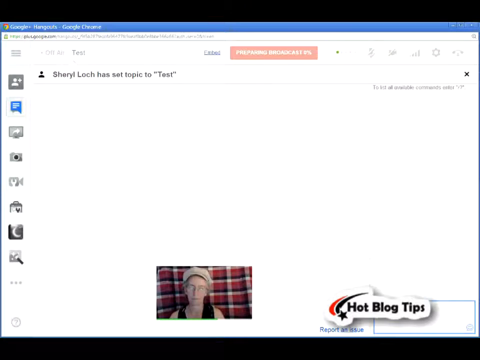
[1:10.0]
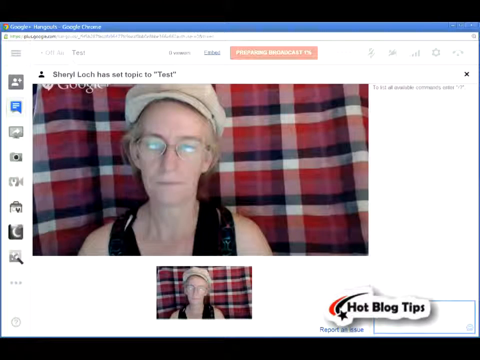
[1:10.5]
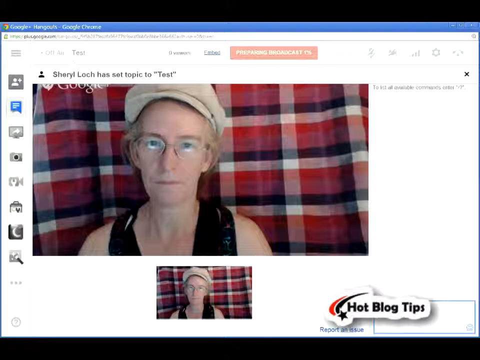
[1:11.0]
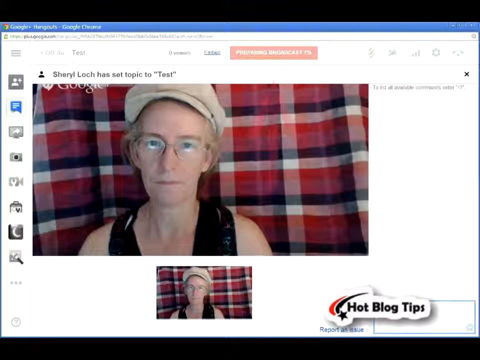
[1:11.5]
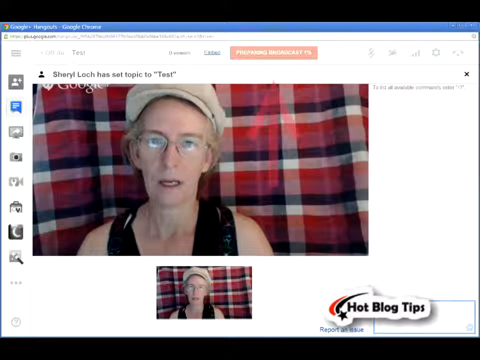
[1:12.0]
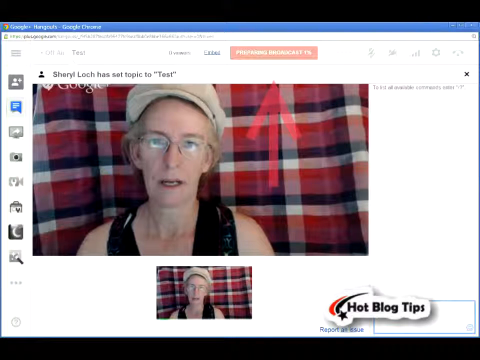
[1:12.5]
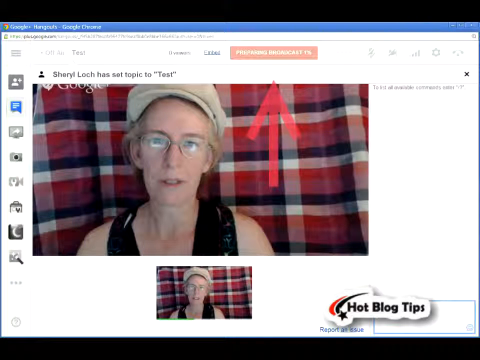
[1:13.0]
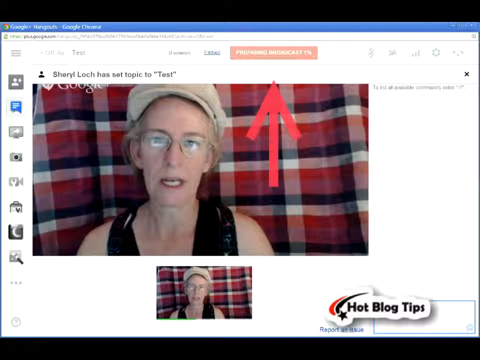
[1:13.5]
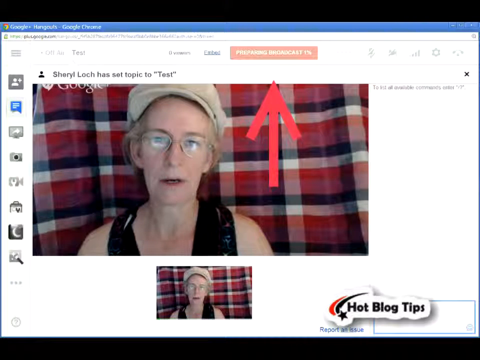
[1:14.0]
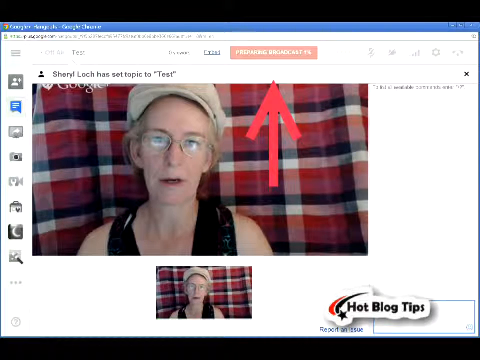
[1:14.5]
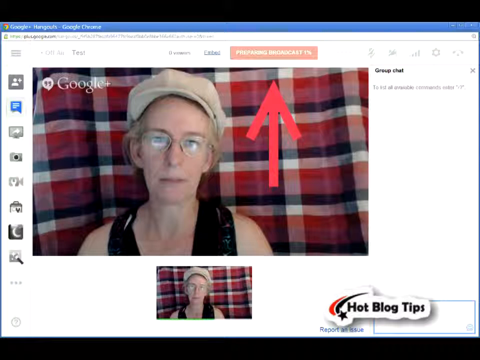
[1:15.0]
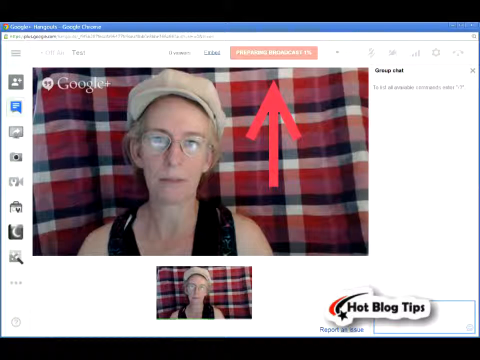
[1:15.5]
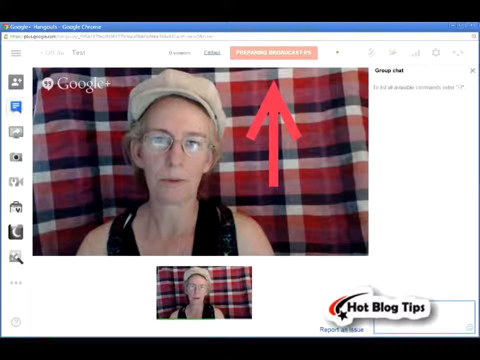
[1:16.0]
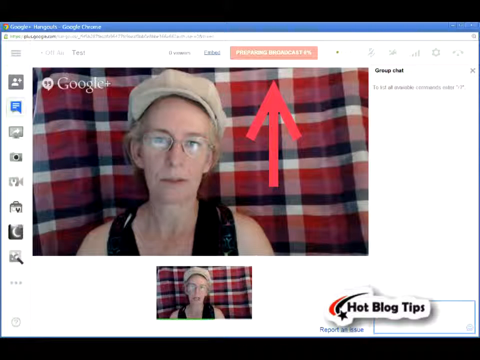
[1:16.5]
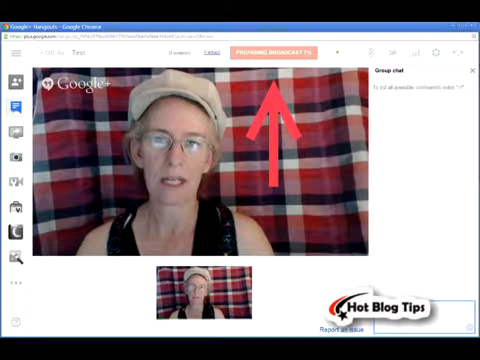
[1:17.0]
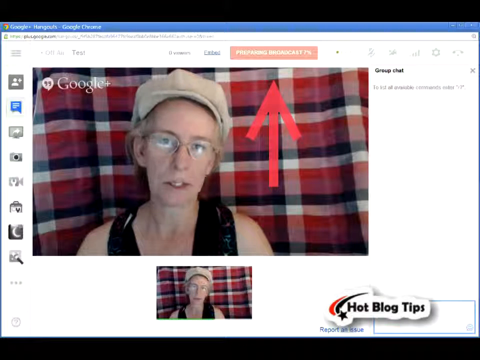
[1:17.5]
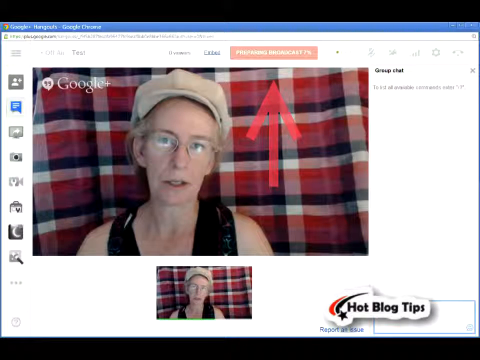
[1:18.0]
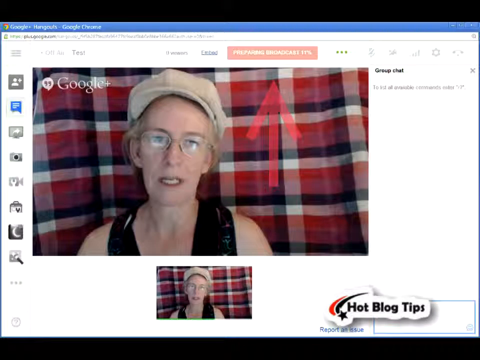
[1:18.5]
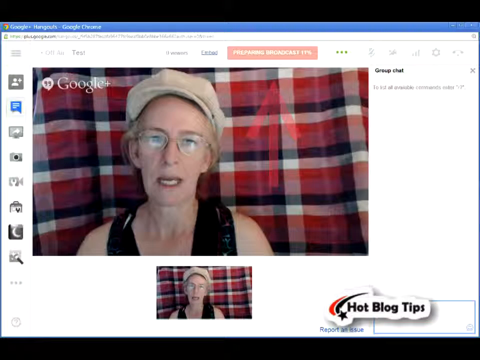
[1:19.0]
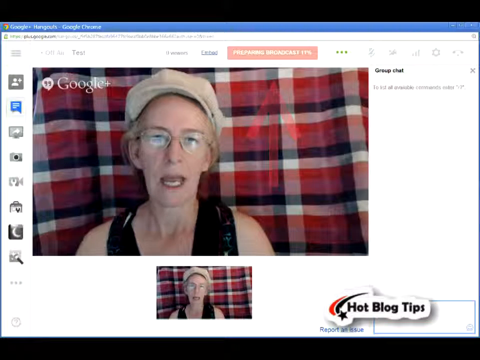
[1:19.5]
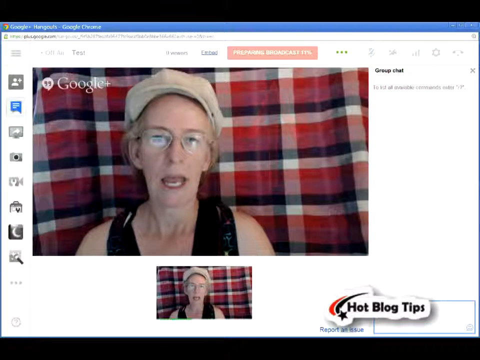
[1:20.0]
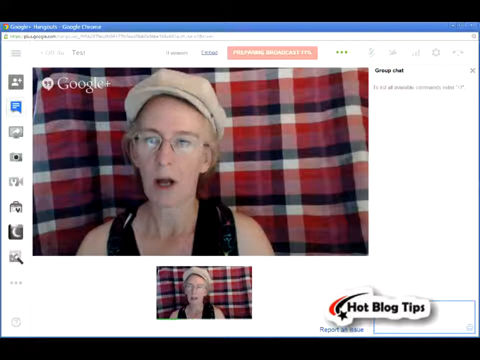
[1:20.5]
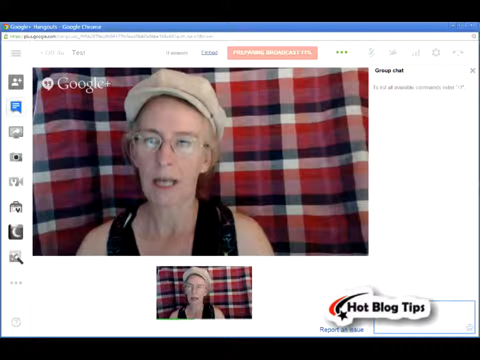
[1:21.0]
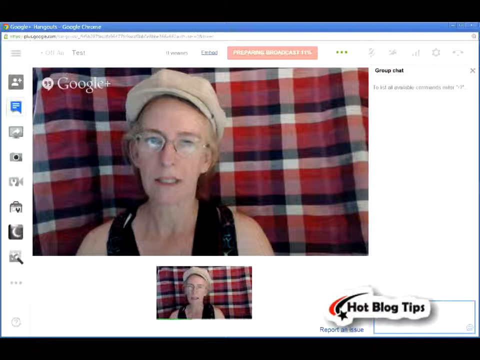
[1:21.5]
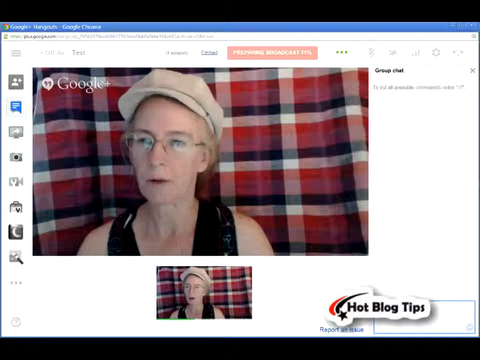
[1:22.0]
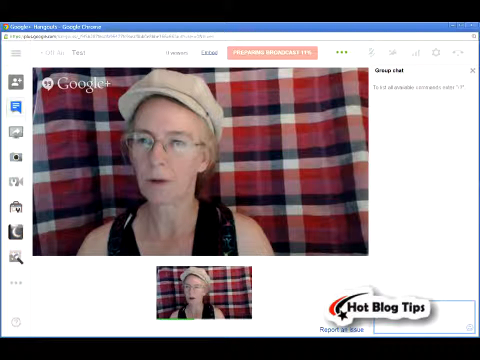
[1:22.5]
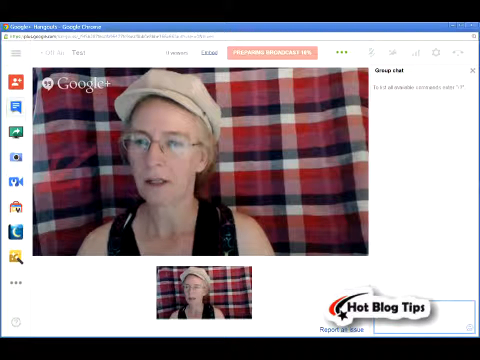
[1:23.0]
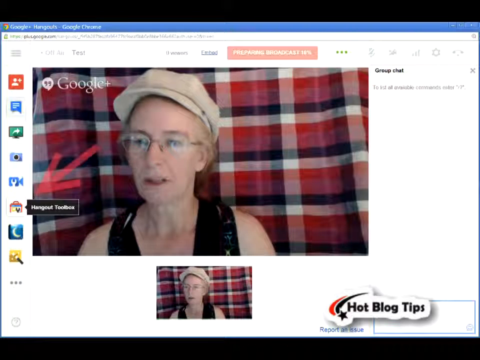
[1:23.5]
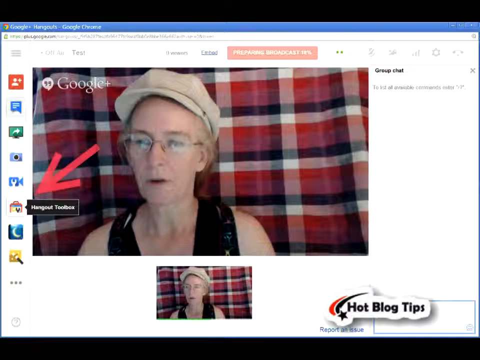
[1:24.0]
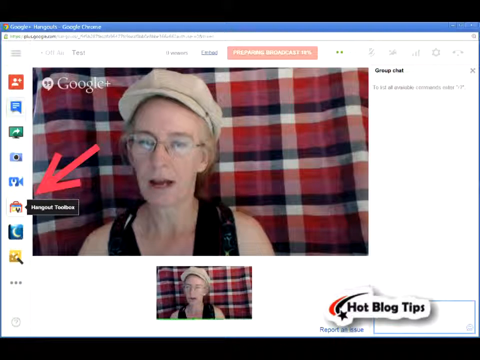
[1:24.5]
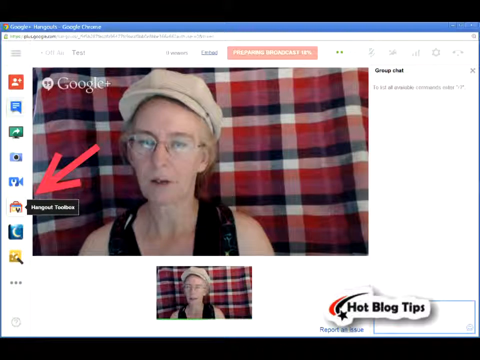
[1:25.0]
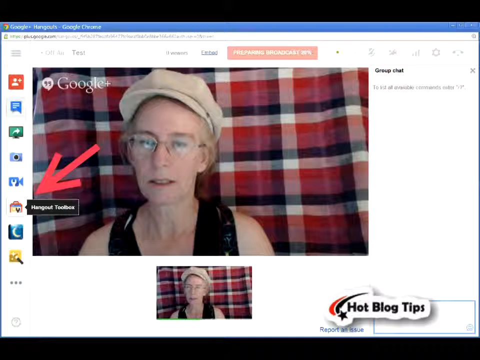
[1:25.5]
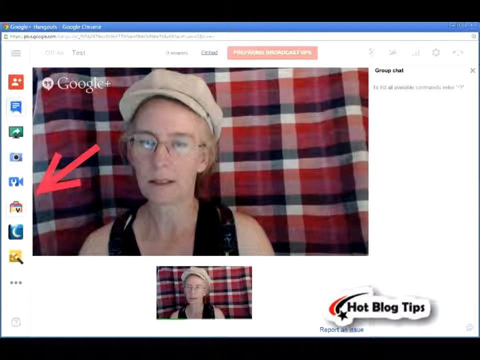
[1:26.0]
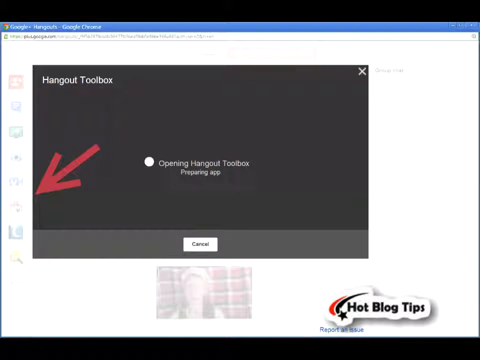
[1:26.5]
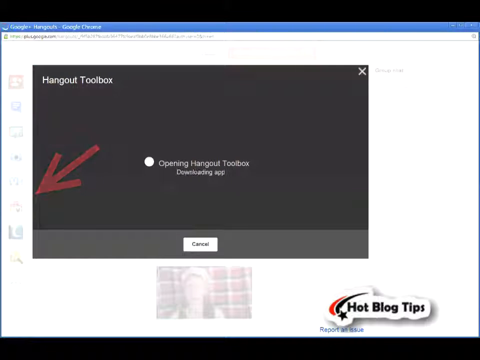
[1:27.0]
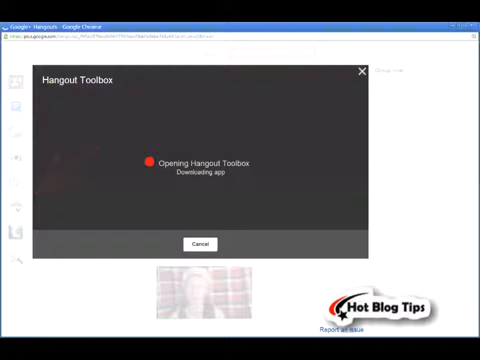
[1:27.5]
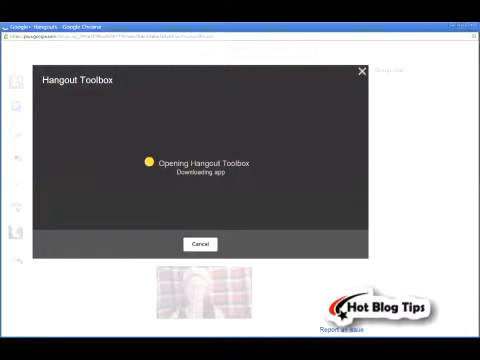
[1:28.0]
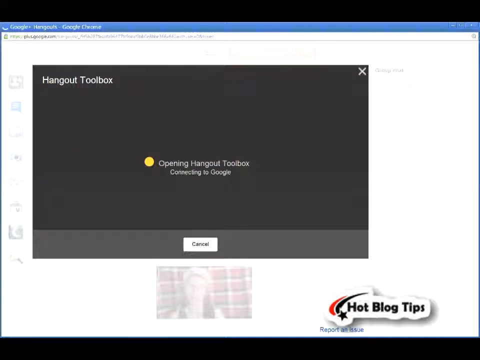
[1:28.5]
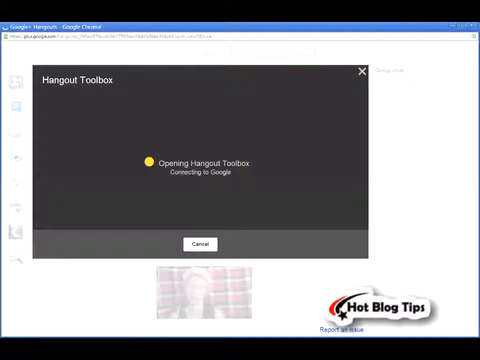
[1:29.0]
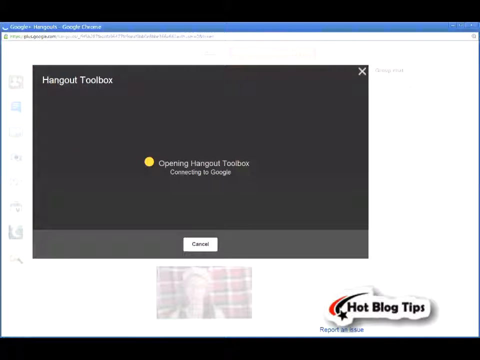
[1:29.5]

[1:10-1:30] The screen shows the user, Cheryl Lowe, who wears glasses, a hat and a black vest. She is talking, probably about the test event, while a red arrow points upward to a button for preparing the broadcast. The background of her video is something red, the same as the background in her avatar. She keeps talking and moves her head left and right. A red arrow then points left to an icon whose label begins "hang out" but cannot be seen clearly. The view switches to a pop-up window reading "opening Hangout toolbox" and "Downloading app," and the icon apparently says "hangout toolbox." A red dot on the pop-up window turns yellow.